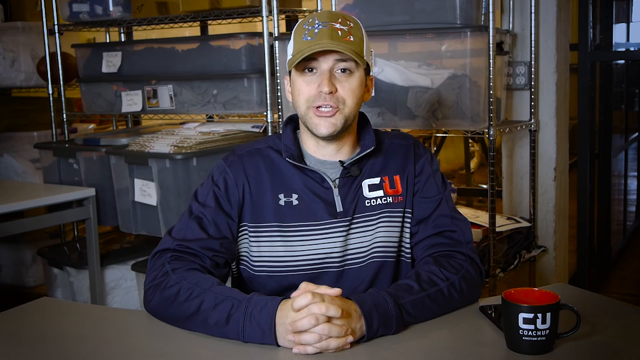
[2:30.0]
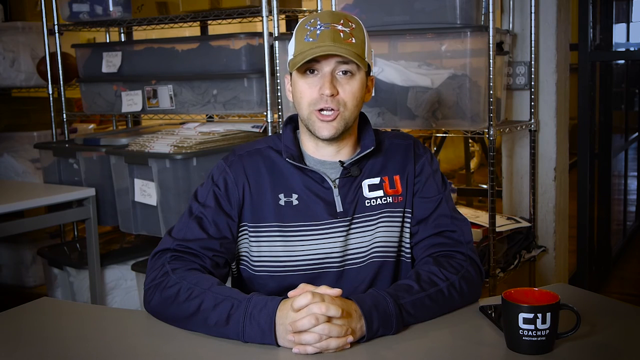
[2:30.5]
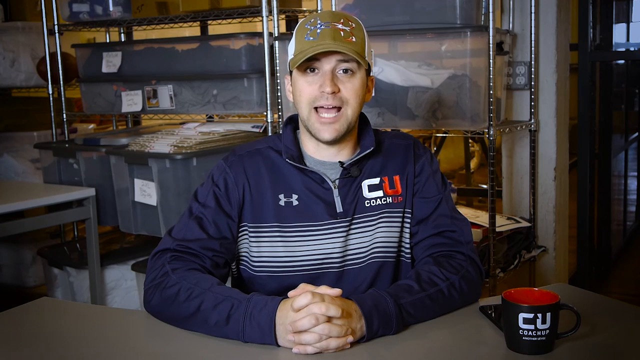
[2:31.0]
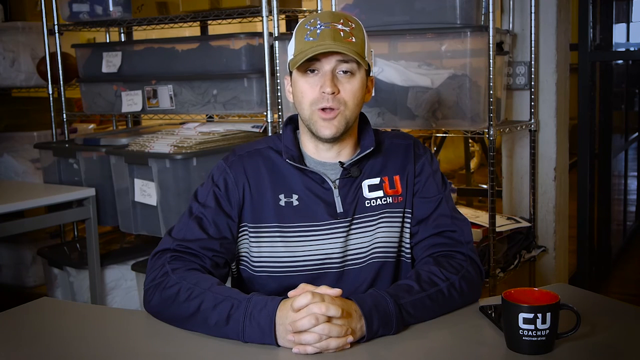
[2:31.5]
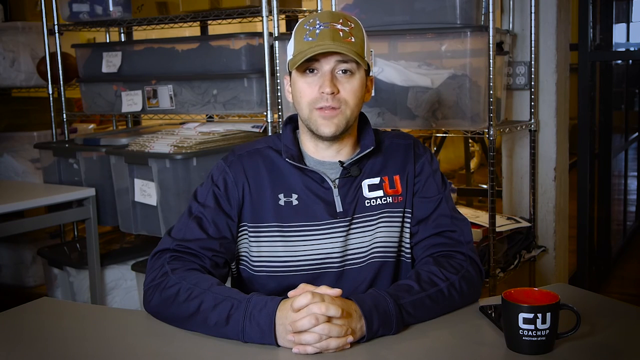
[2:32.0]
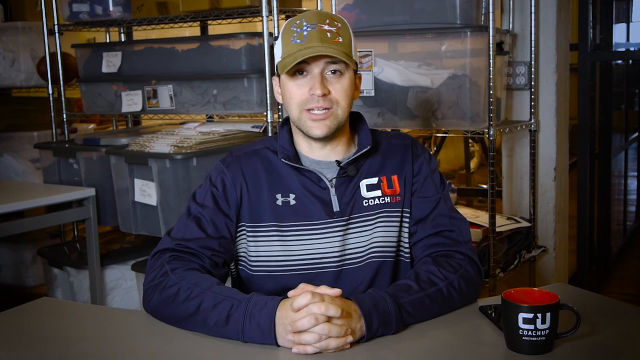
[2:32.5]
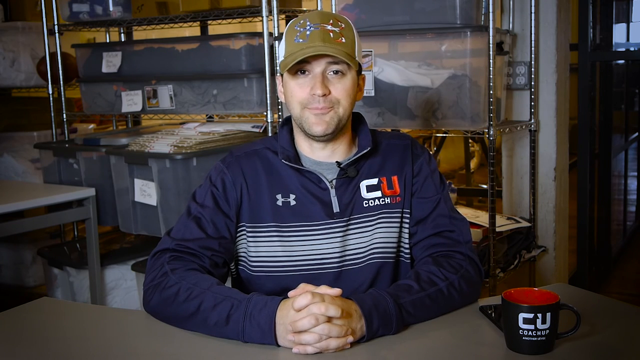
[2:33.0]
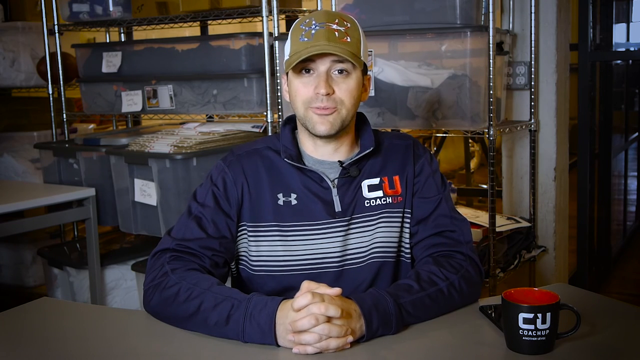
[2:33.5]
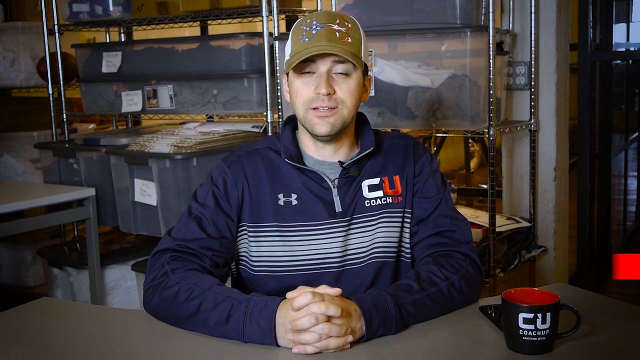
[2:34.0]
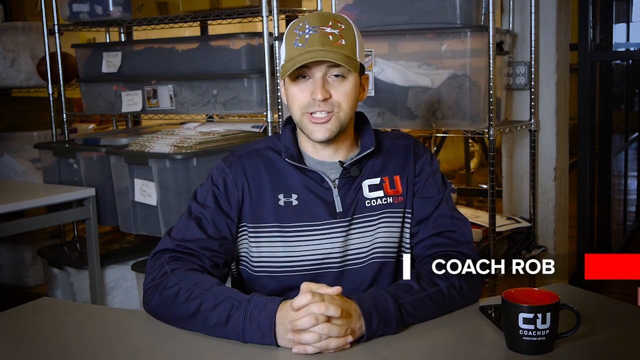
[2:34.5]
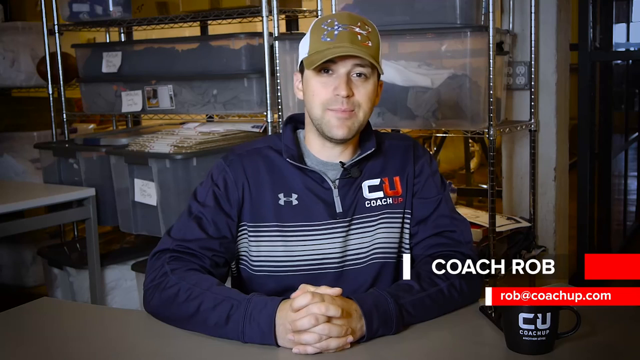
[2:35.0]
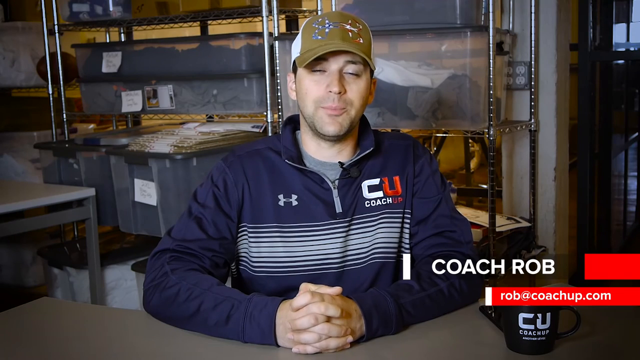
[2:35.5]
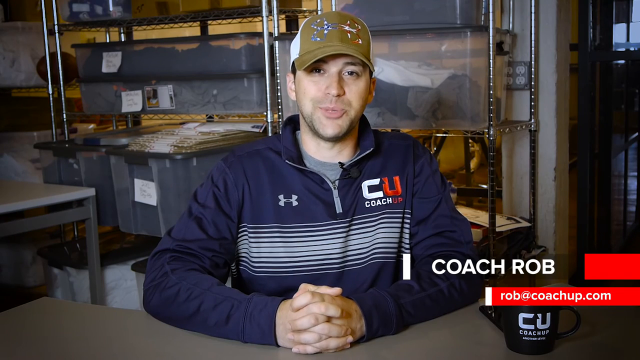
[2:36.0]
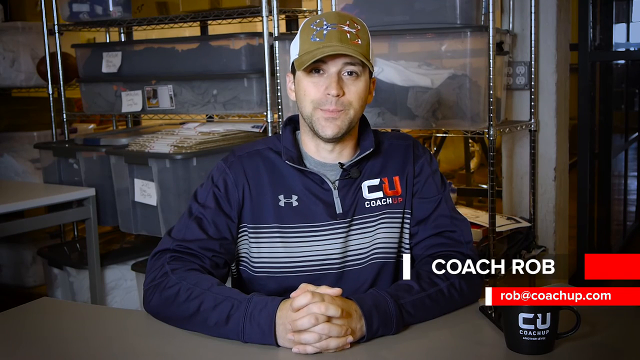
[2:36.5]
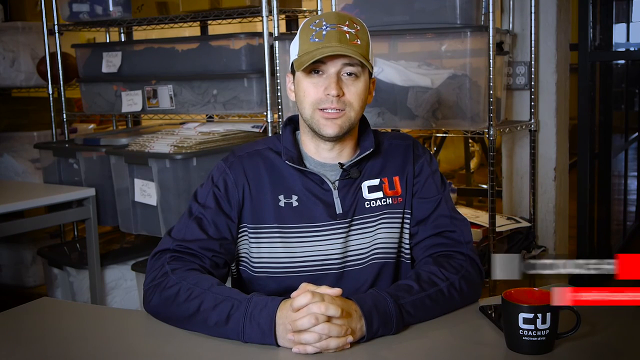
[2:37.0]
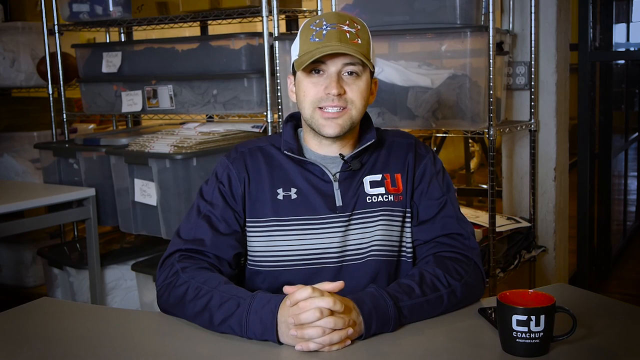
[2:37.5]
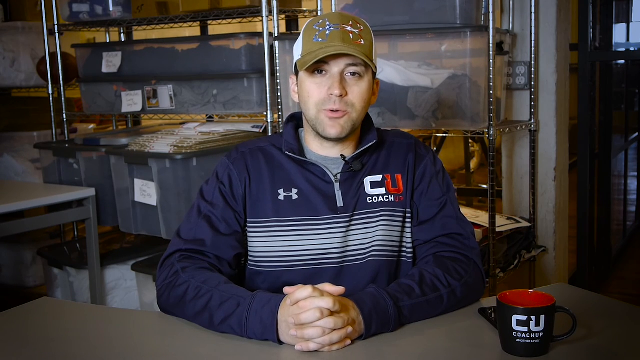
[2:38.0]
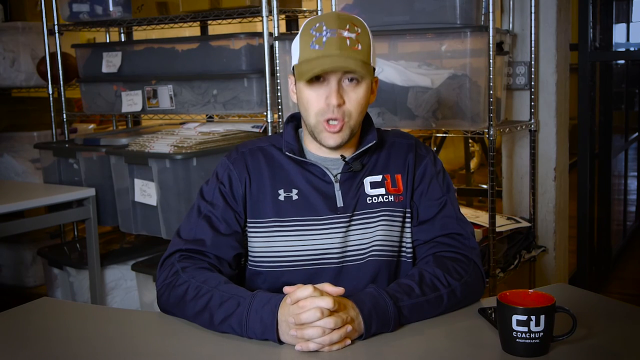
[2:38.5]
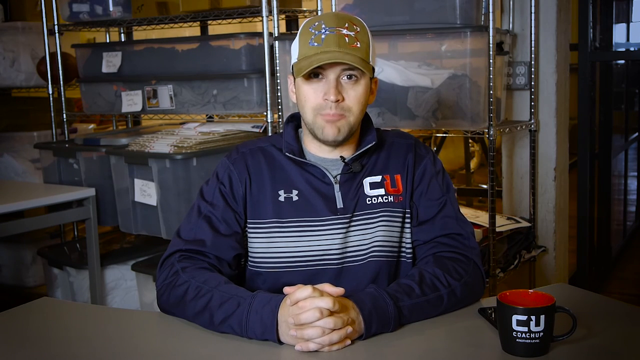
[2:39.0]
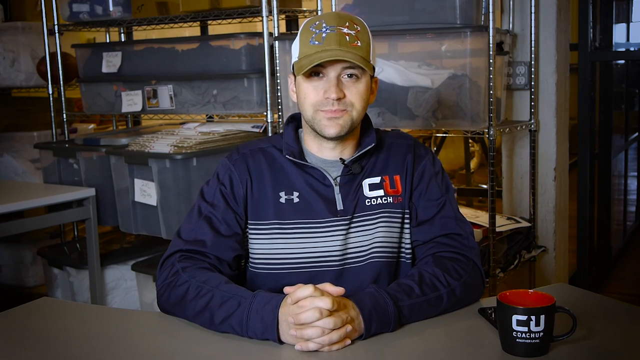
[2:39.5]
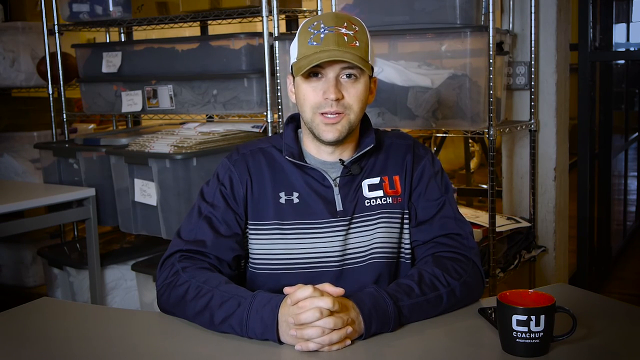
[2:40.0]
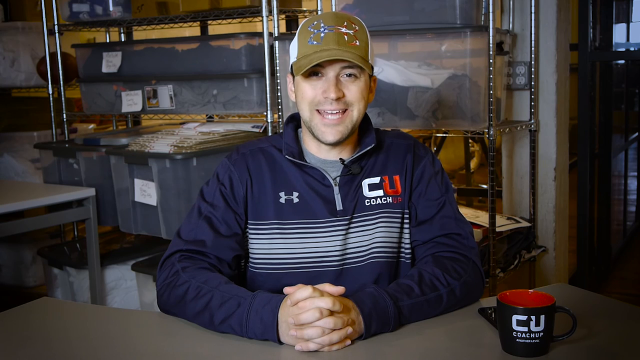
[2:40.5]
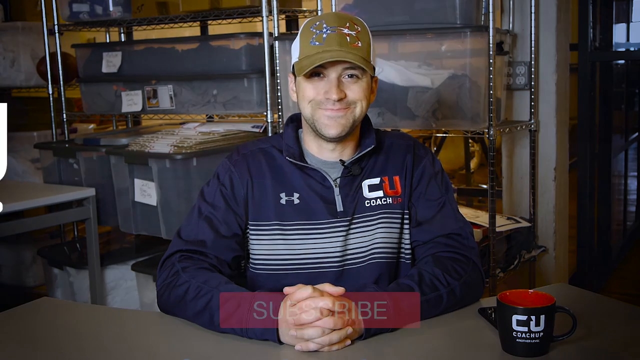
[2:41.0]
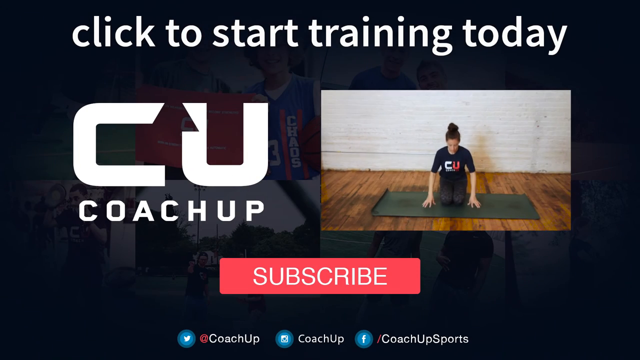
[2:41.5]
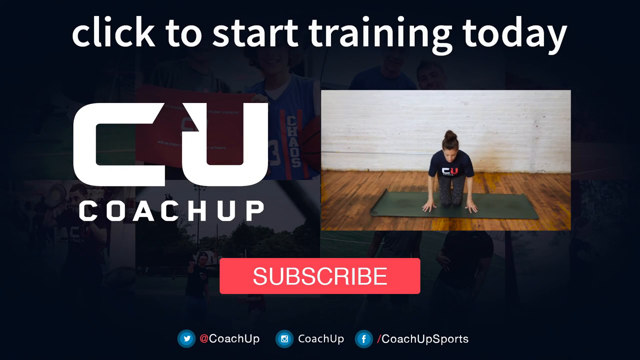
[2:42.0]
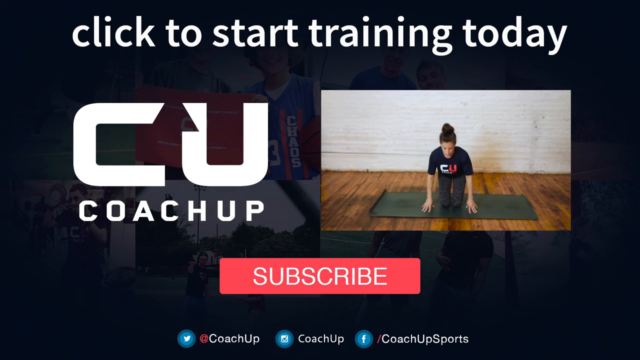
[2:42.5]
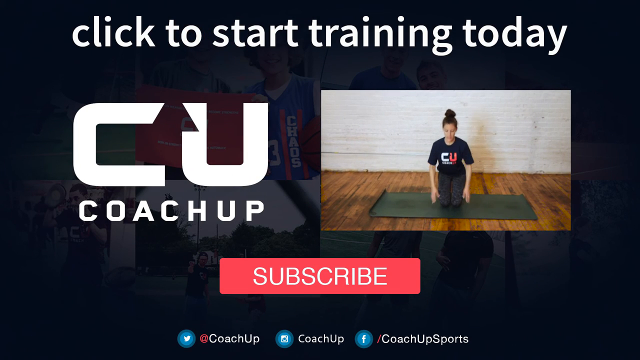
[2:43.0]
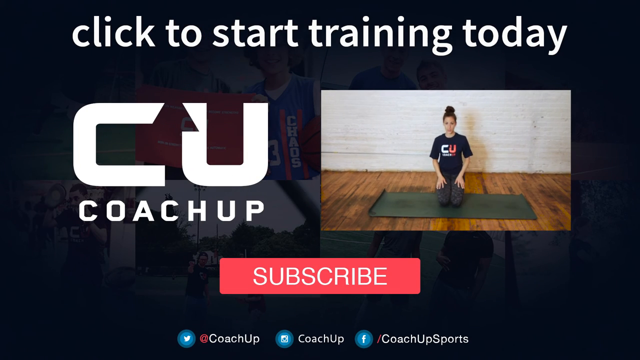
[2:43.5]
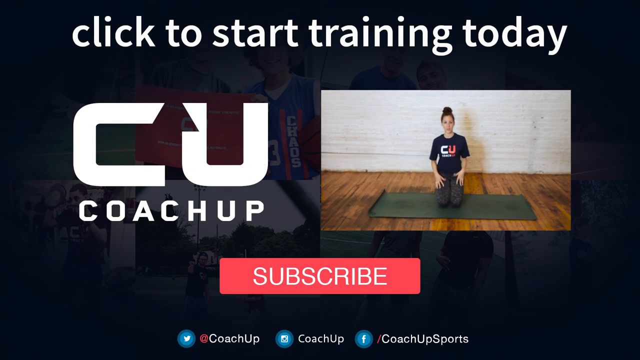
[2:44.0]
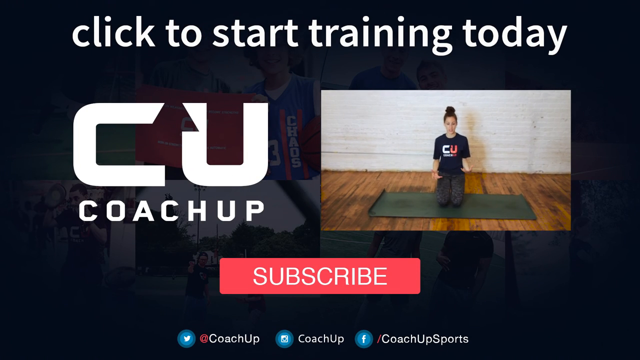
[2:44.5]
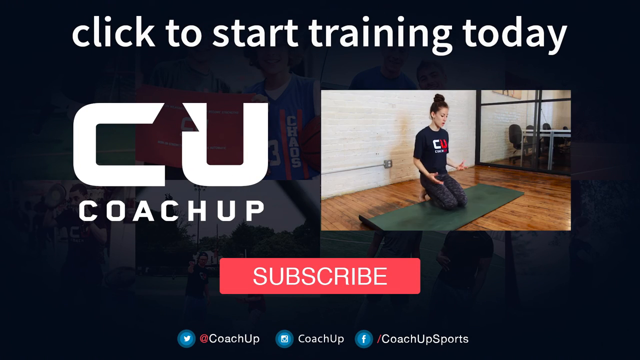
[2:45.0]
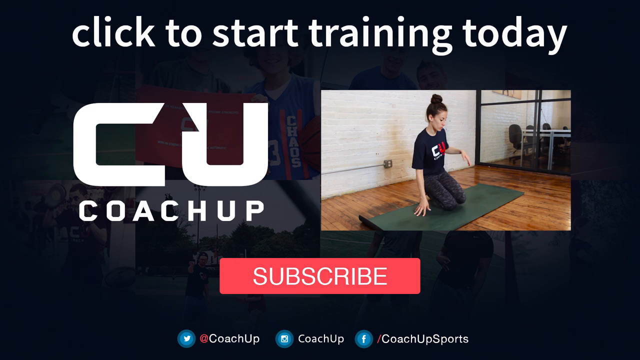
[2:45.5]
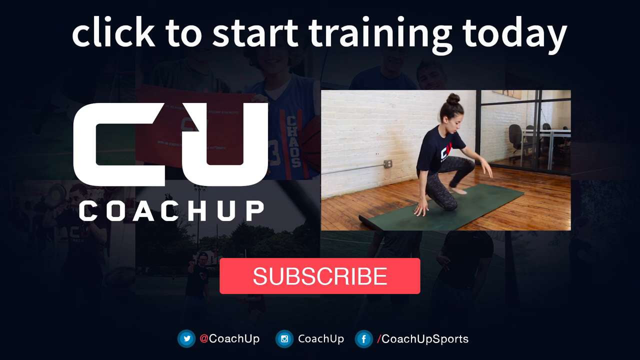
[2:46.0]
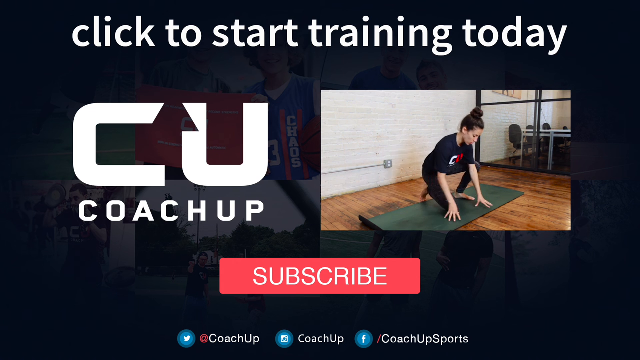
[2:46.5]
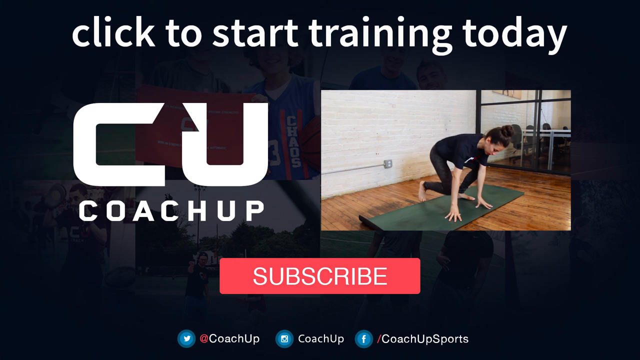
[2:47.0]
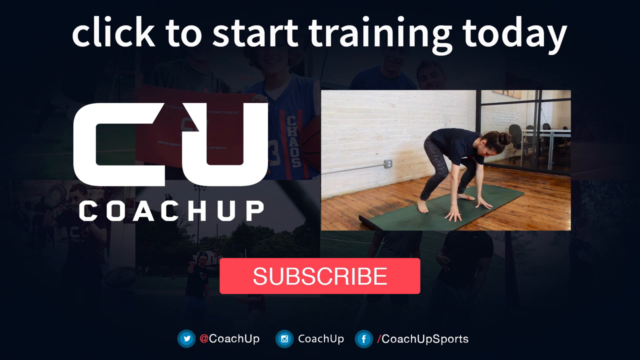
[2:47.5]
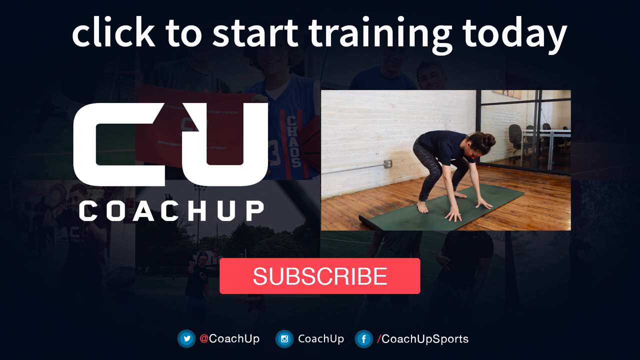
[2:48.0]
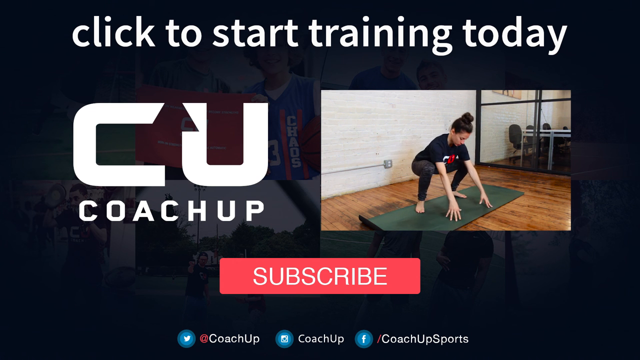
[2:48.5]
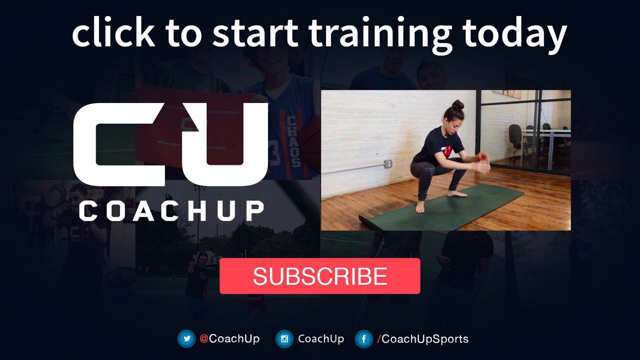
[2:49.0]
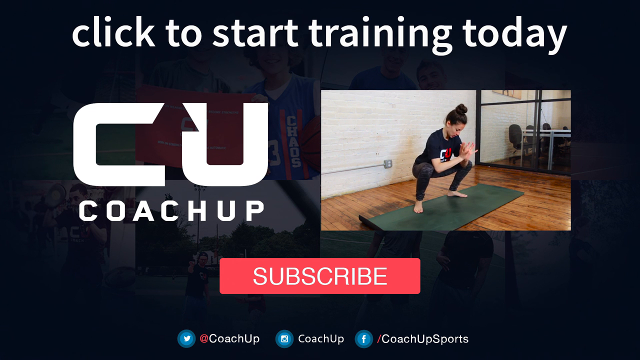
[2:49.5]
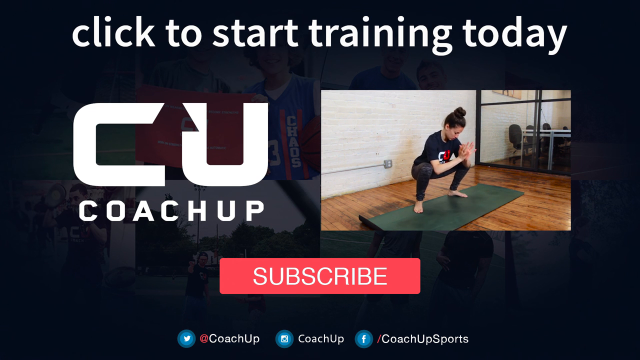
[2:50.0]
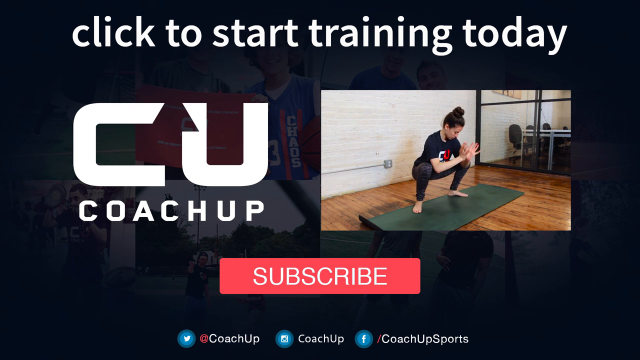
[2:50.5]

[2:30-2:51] A man talks on camera as words slide onto the bottom right of the screen: "Coach Rob, Rob at CoachUp.com." The CU initials appear on his shirt and on the coffee cup on the desk next to him. The video then transitions to a screen that says "click to start training today" at the top, with the CoachUp logo and, below it, a red subscribe button. On the right side of this final page is a video of a person, one of the coaches, doing some type of yoga routine on a yoga mat throughout, ending in a half-standing pose as the video ends.